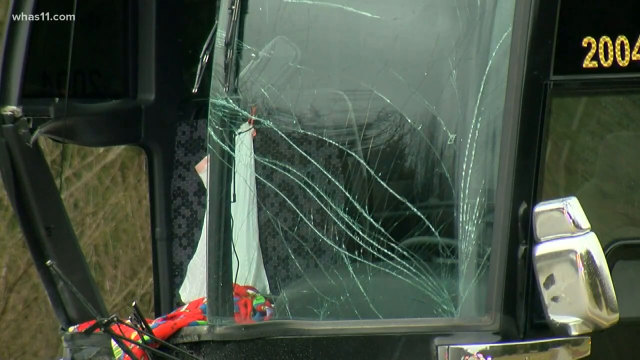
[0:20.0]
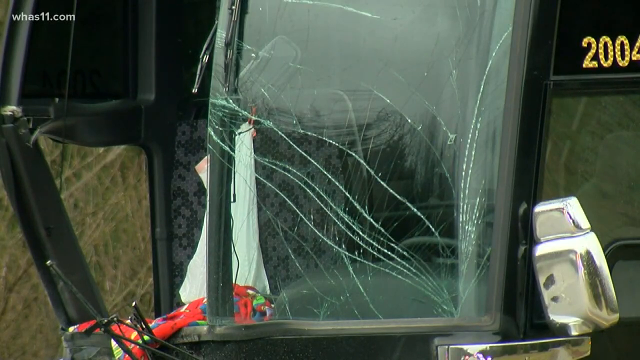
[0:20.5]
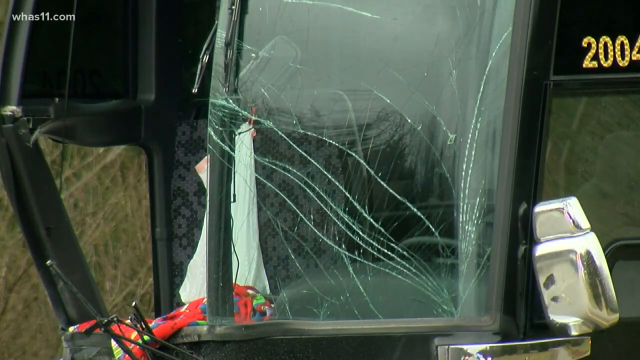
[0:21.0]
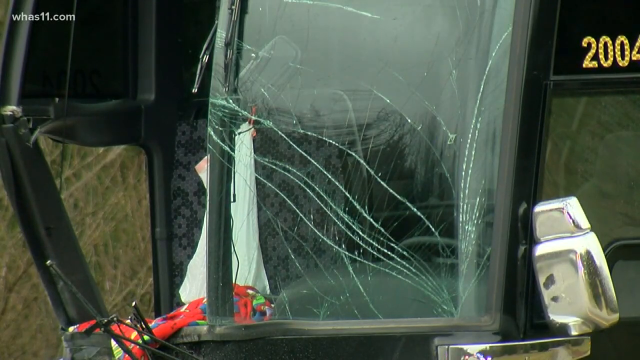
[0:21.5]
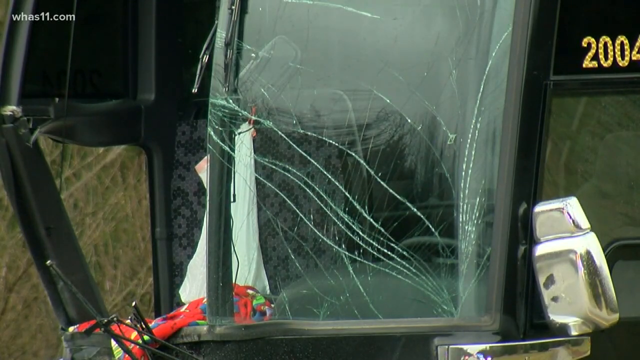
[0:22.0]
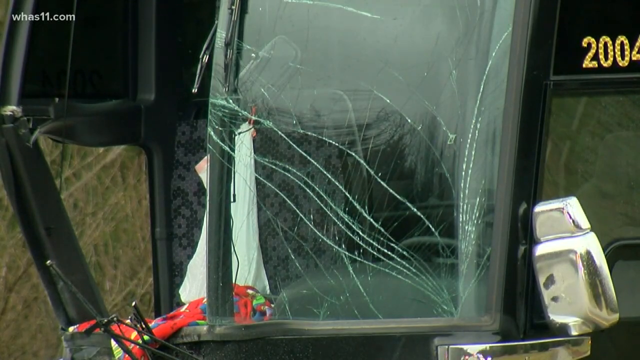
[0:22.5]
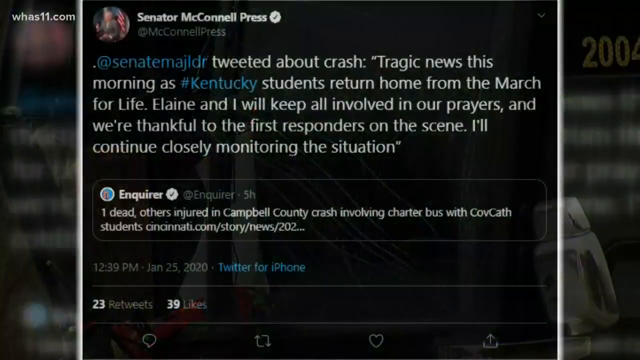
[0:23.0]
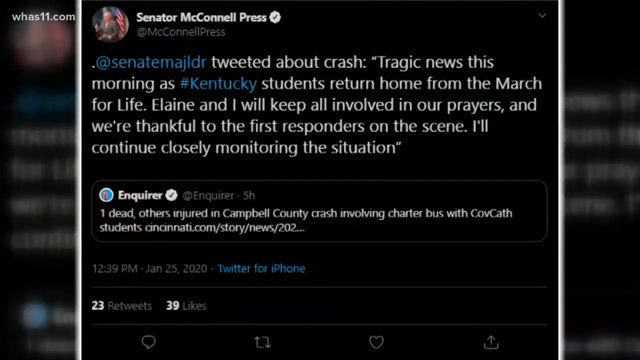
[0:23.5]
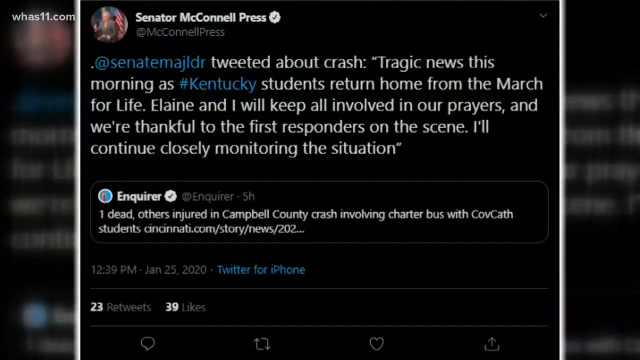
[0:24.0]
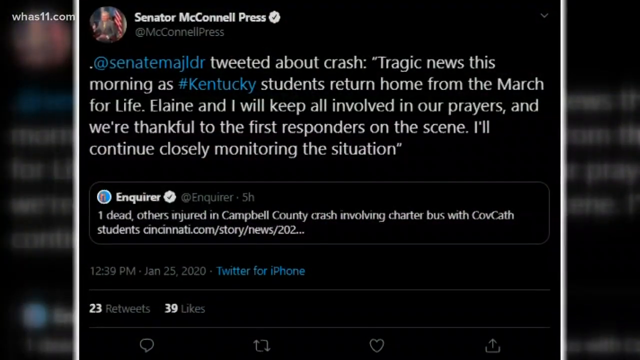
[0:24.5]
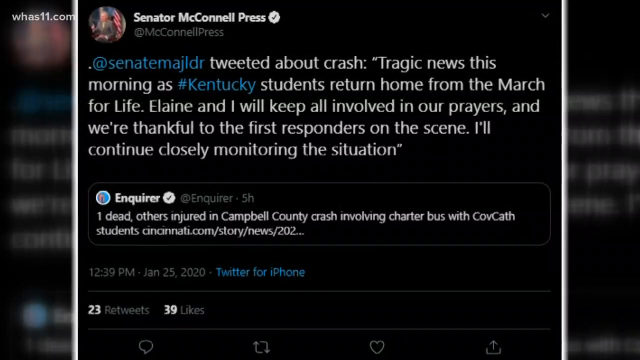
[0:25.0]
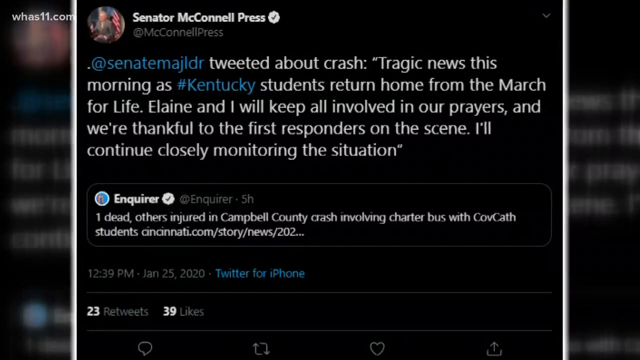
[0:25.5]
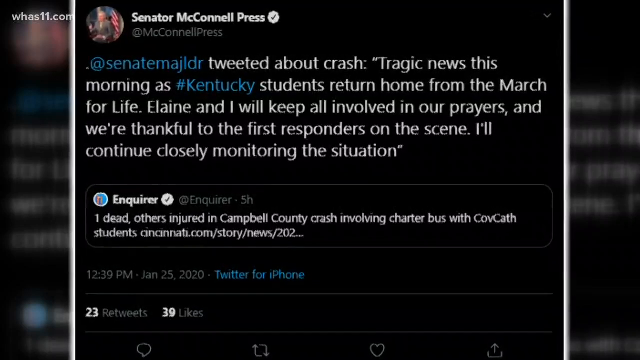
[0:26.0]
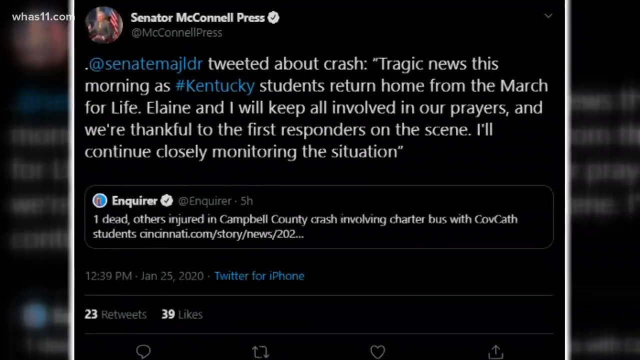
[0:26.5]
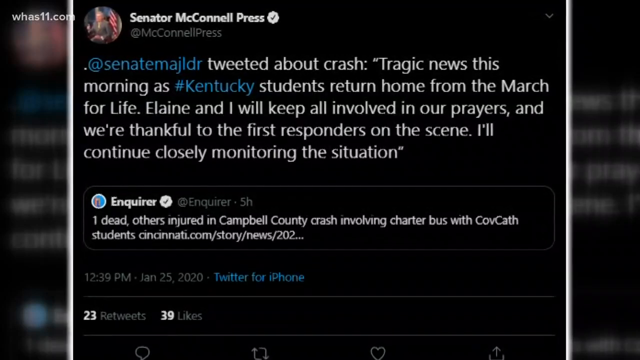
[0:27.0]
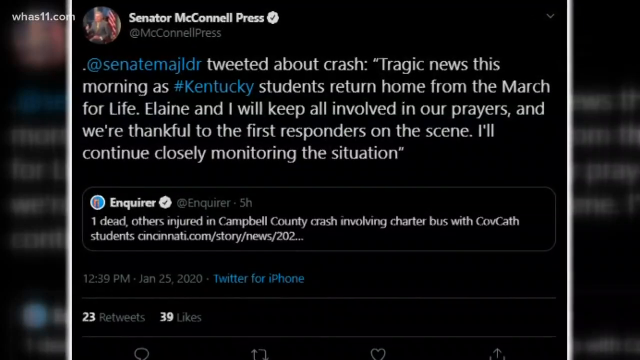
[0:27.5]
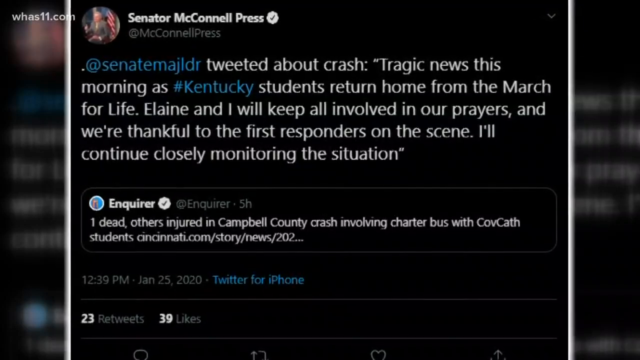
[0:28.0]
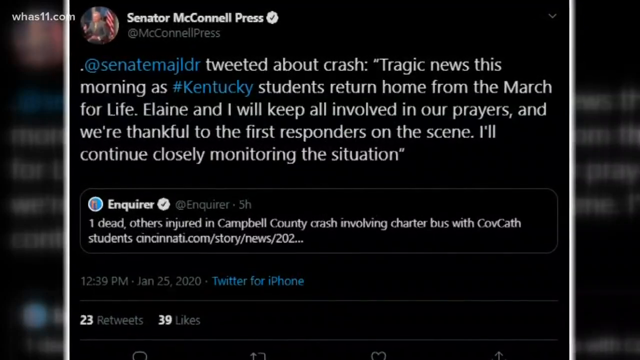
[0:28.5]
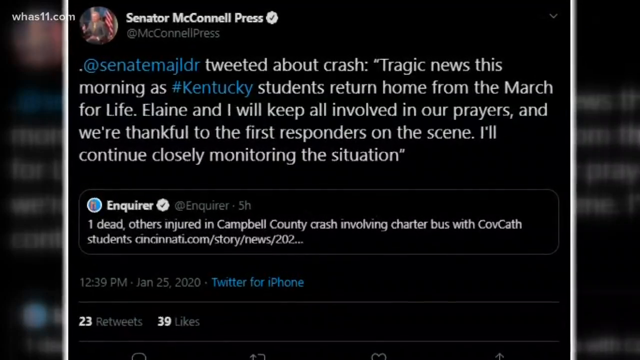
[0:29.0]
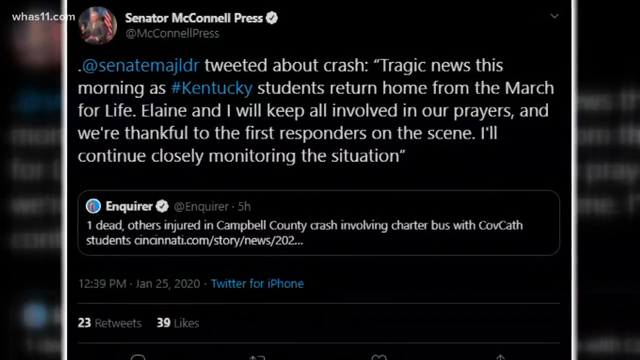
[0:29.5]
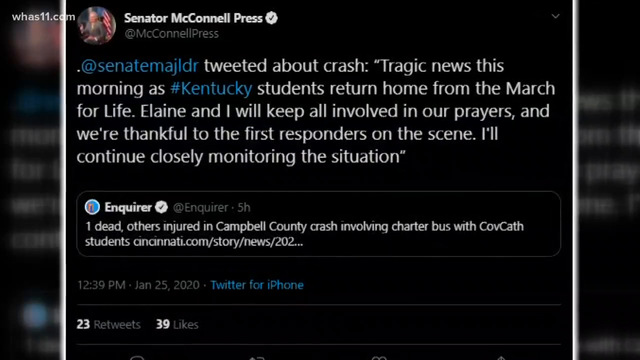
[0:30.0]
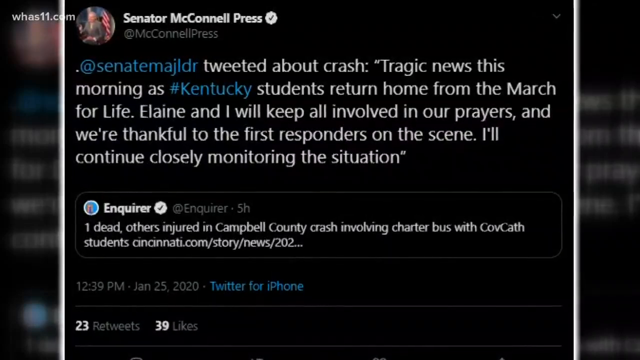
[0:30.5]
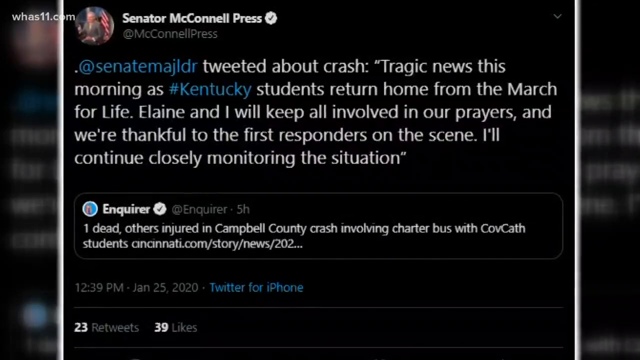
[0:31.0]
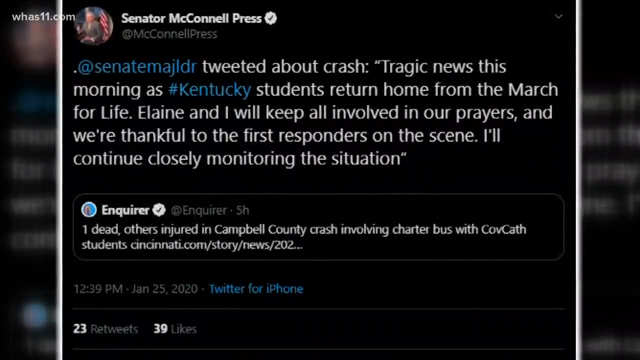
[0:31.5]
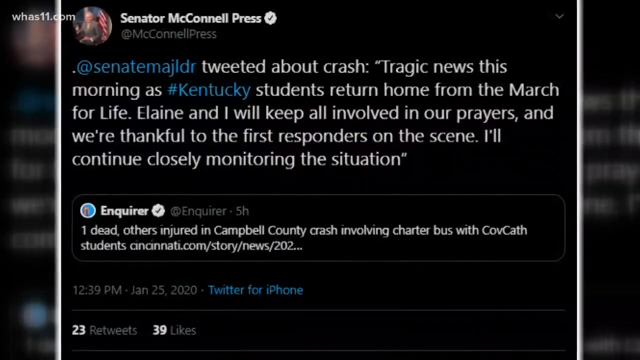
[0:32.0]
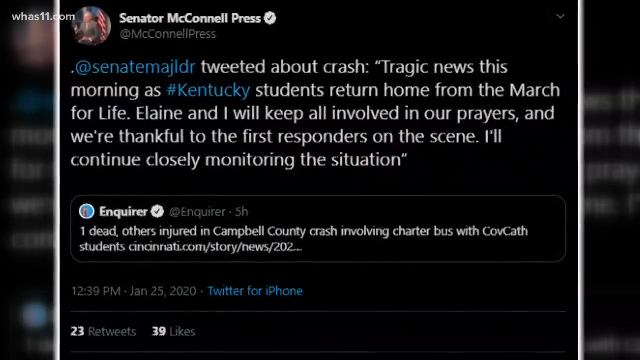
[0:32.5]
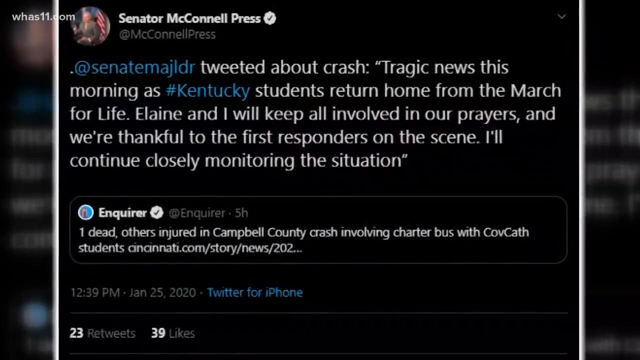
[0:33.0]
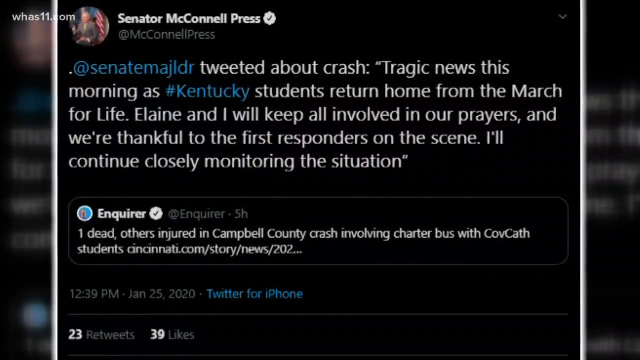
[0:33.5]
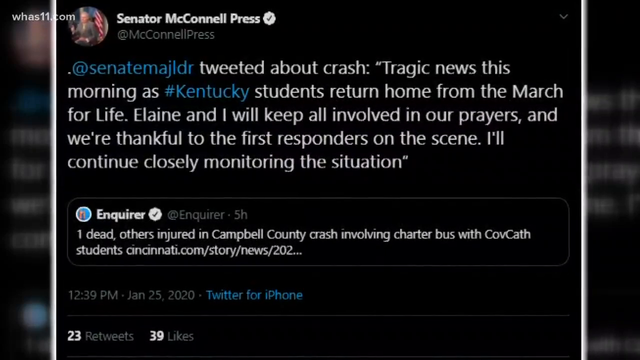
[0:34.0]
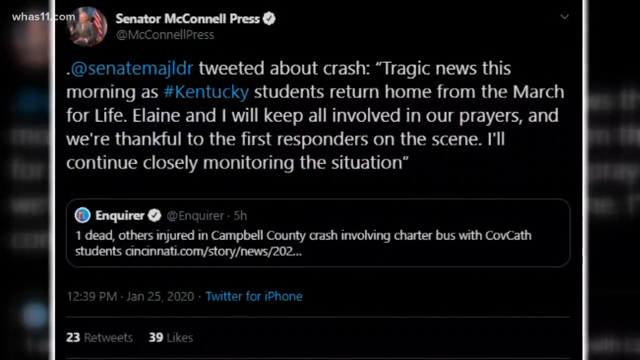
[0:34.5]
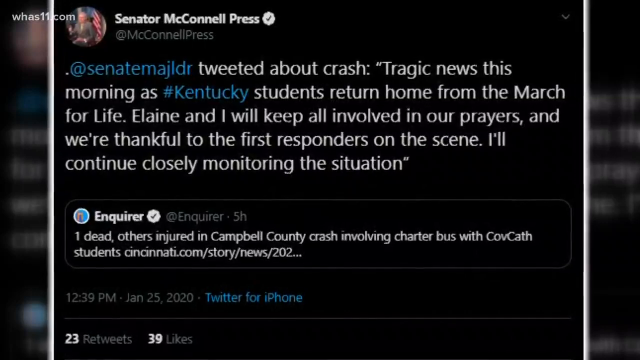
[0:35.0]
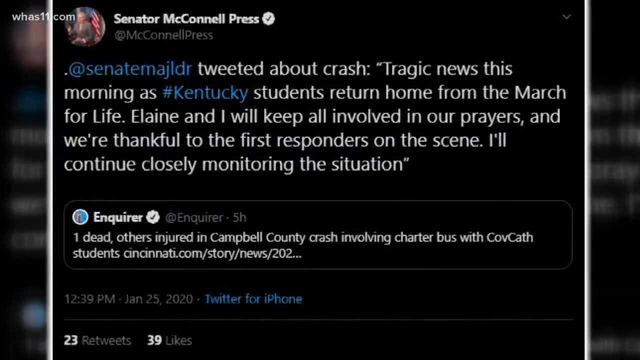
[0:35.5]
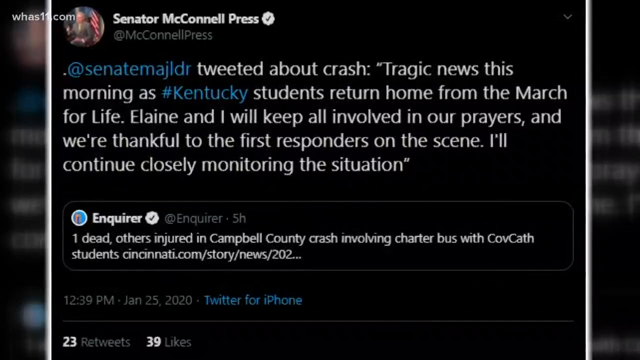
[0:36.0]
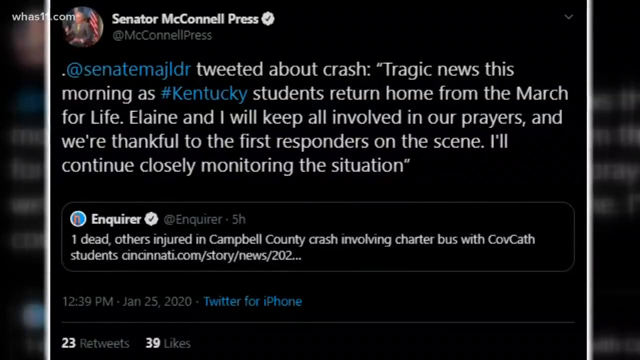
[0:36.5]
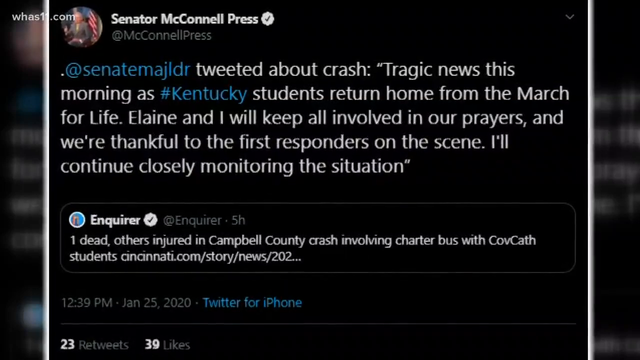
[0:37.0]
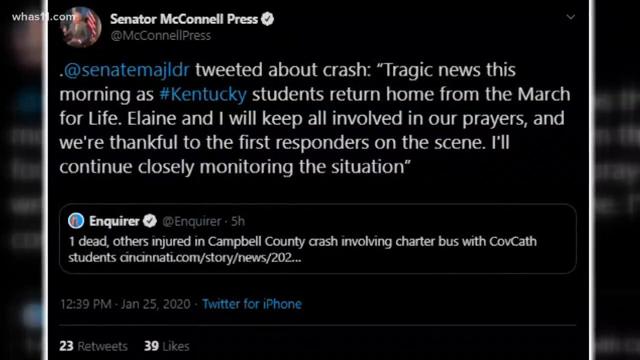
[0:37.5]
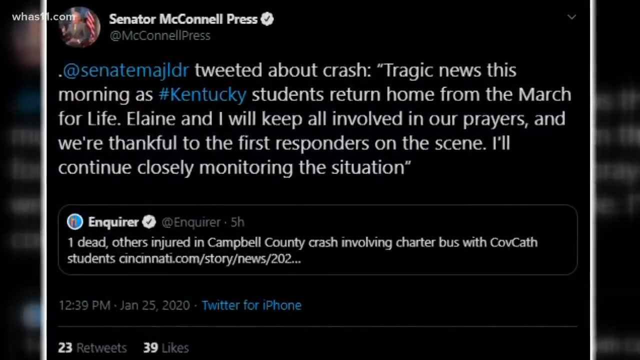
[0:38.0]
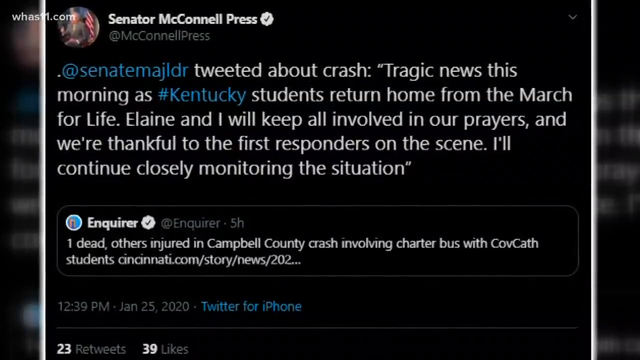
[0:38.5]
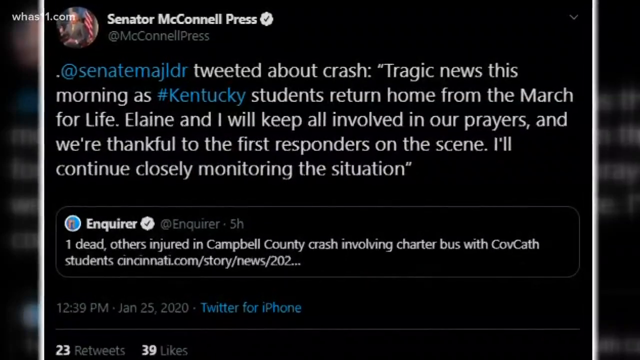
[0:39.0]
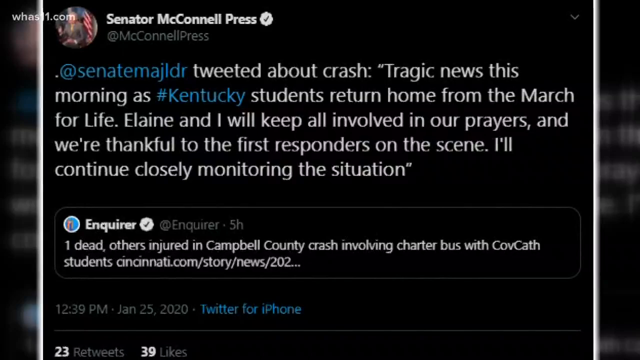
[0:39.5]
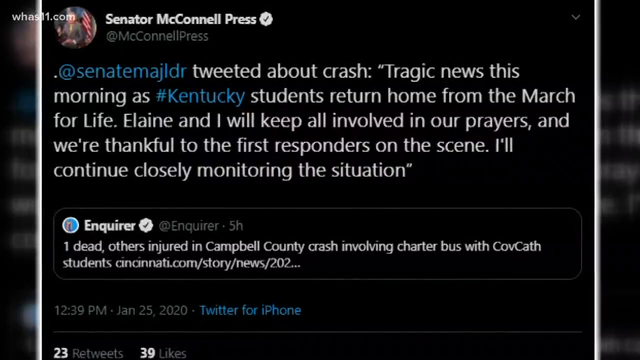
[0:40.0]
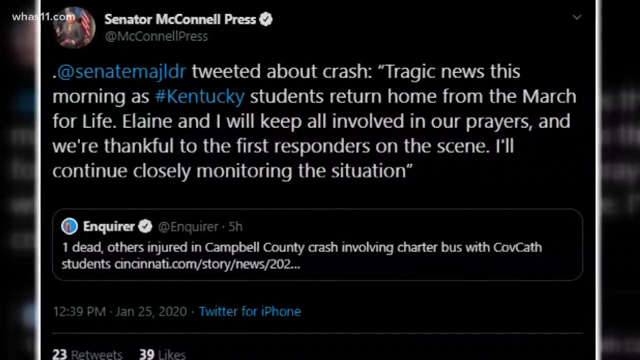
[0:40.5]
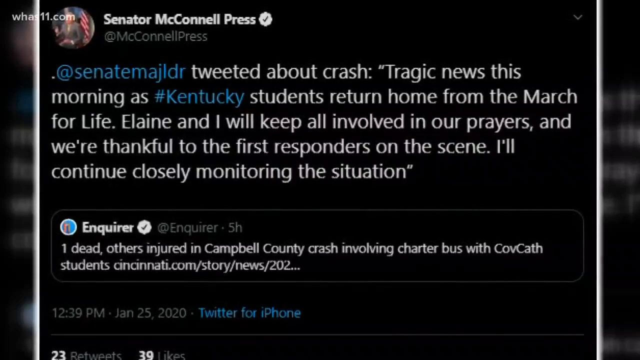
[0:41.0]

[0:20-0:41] The year "2004" is written on the screen. The video then shows a post, a tweet from "Senator McConnell Press", from a senator of Kentucky. It begins "Tragic news this morning", mentions students returning home from March for a life, and includes "we are thankful to the first responders on the scene, I will continue closely monitoring the situation". The focus stays on the post.